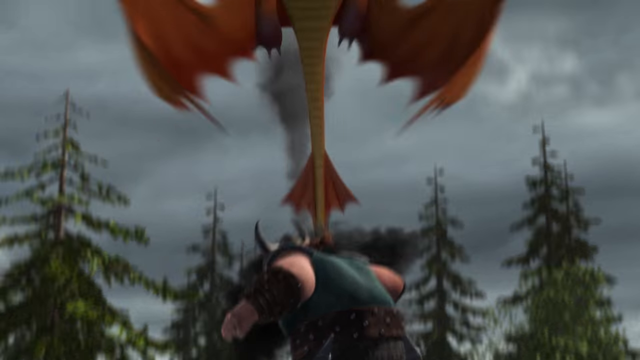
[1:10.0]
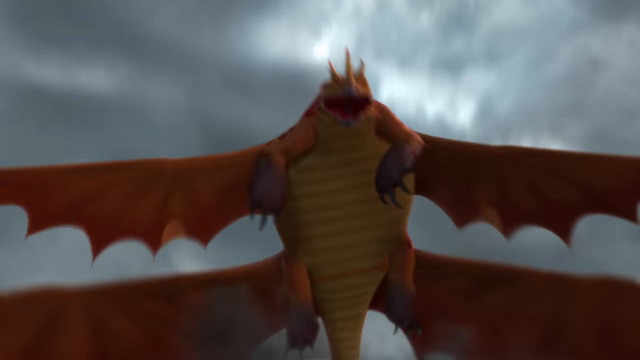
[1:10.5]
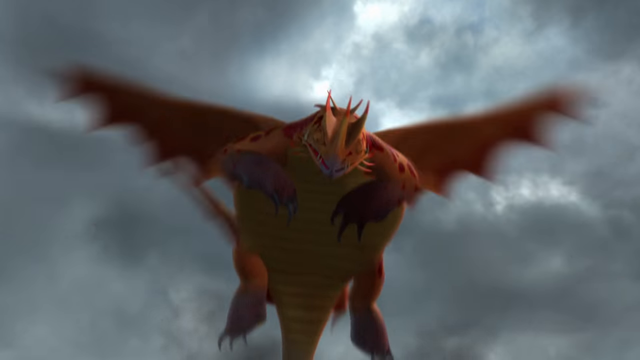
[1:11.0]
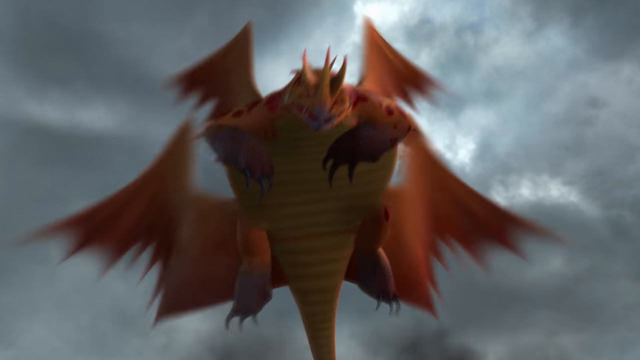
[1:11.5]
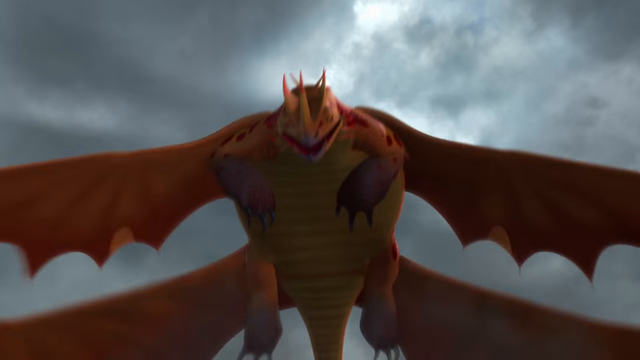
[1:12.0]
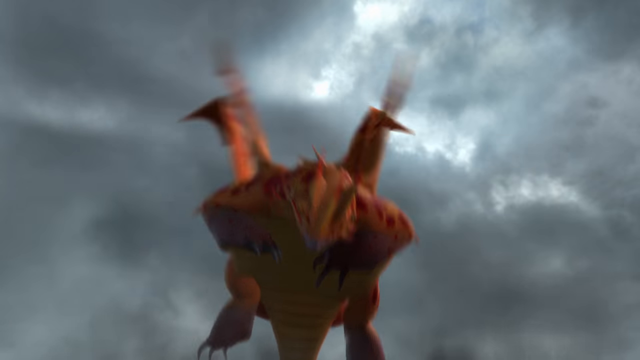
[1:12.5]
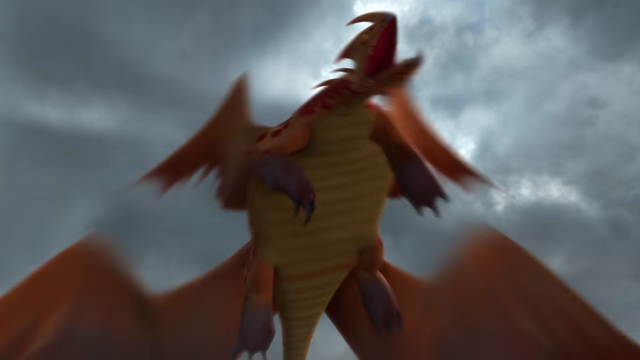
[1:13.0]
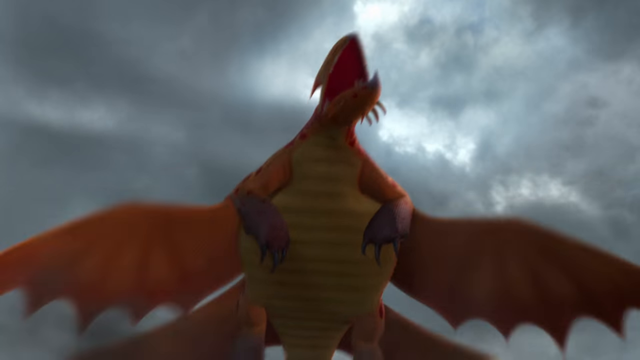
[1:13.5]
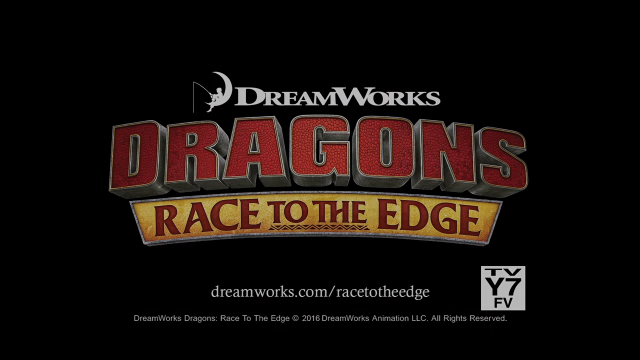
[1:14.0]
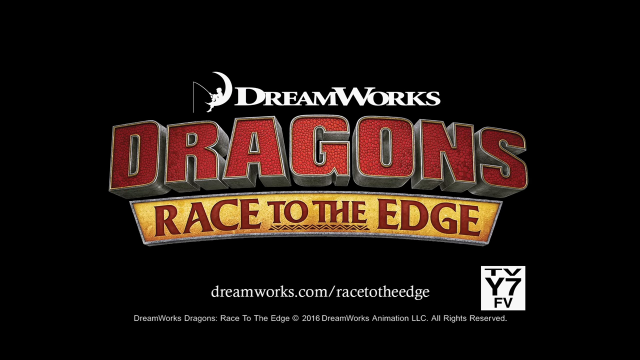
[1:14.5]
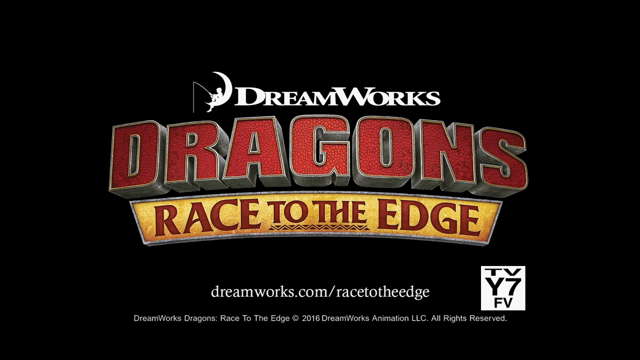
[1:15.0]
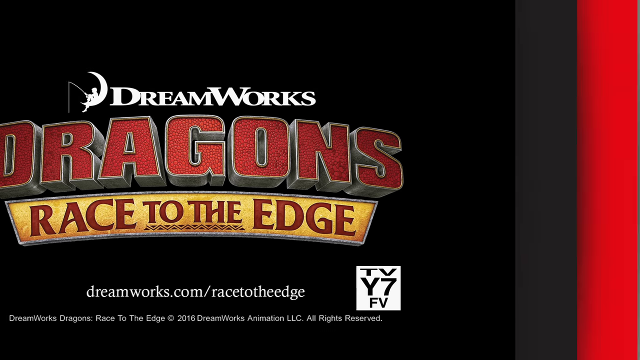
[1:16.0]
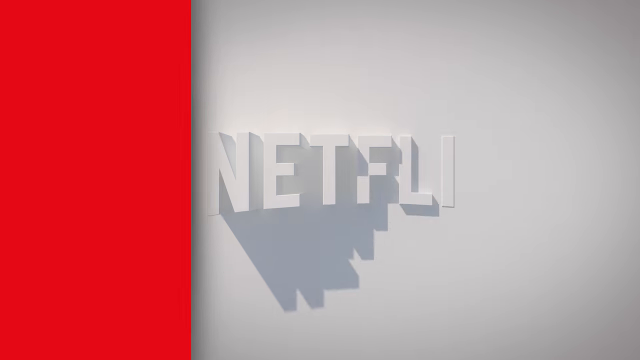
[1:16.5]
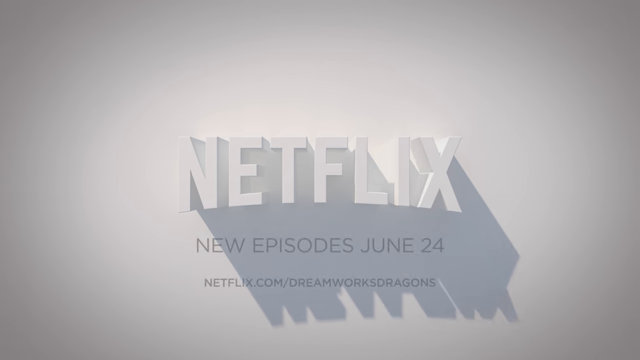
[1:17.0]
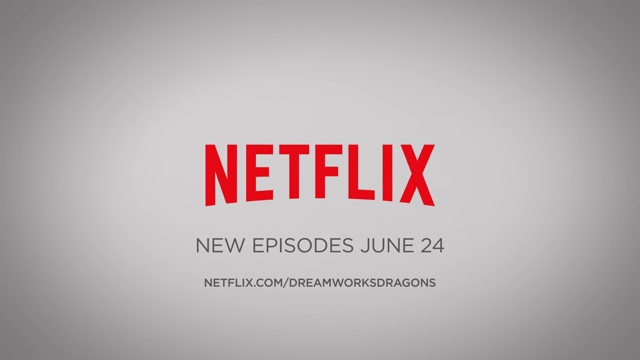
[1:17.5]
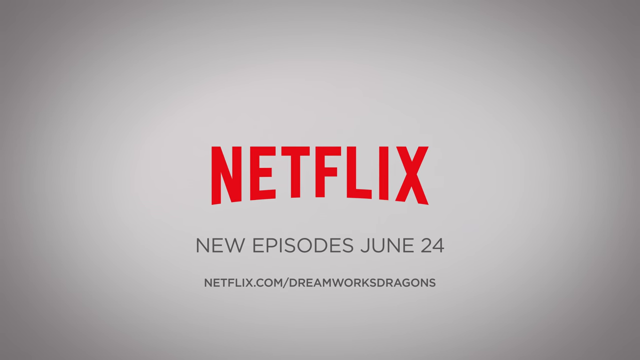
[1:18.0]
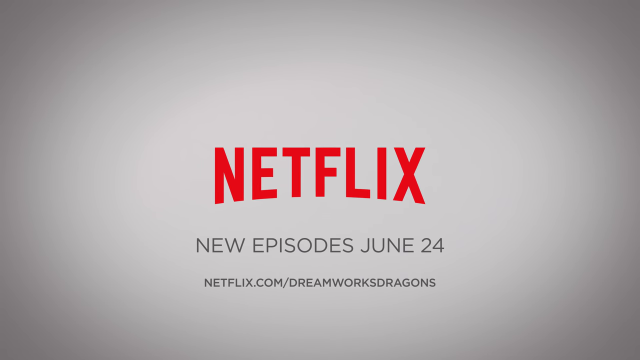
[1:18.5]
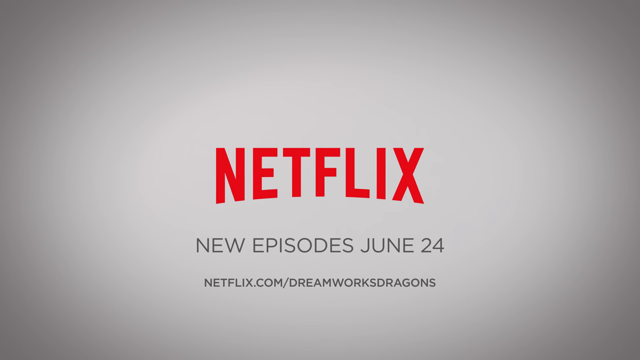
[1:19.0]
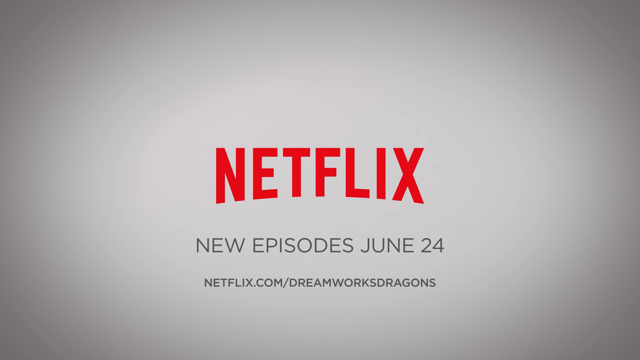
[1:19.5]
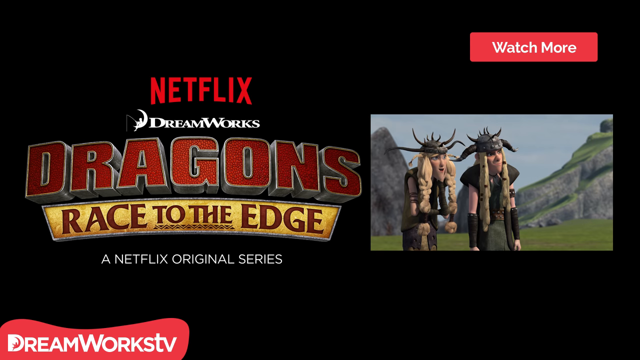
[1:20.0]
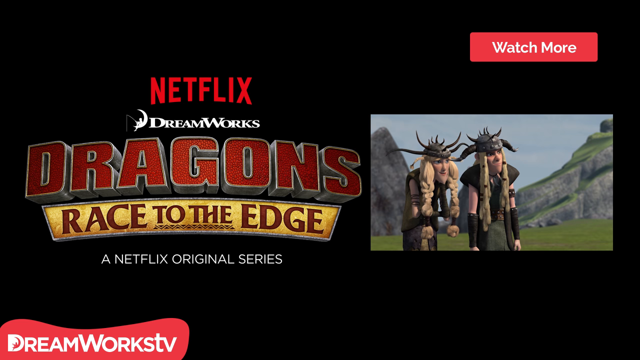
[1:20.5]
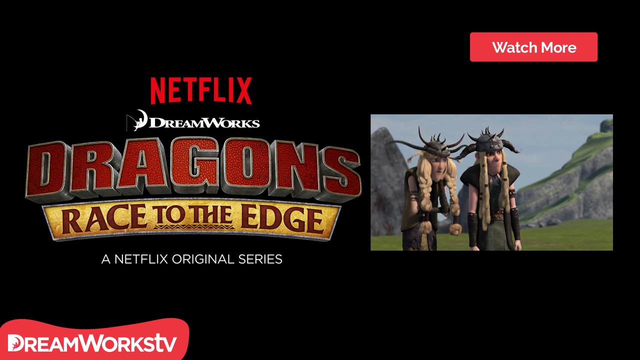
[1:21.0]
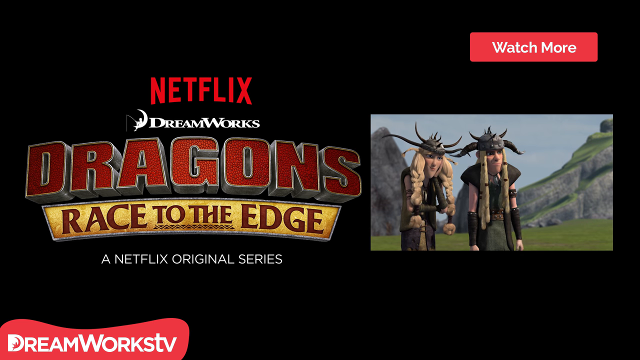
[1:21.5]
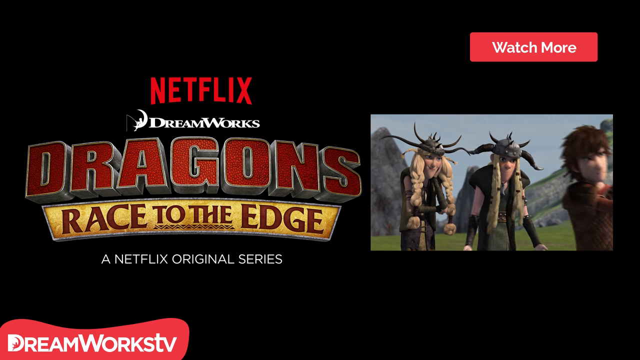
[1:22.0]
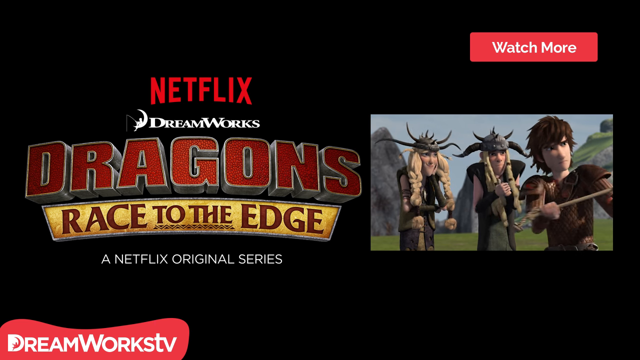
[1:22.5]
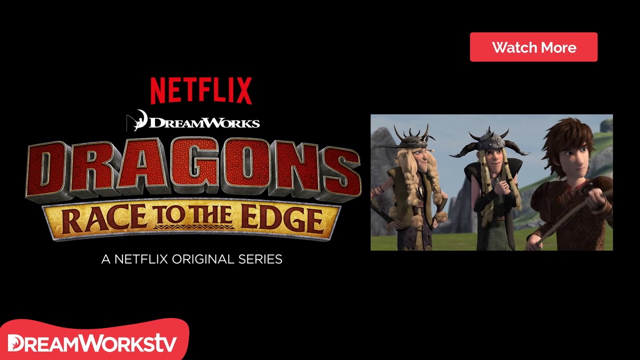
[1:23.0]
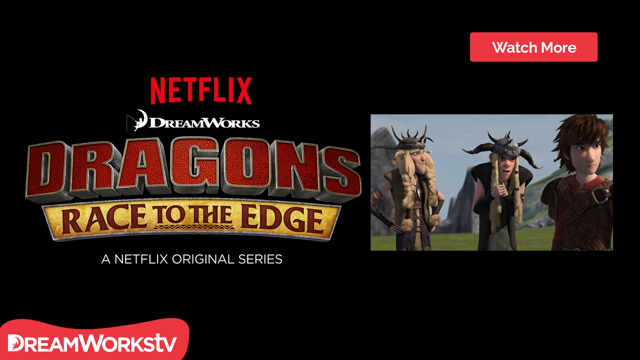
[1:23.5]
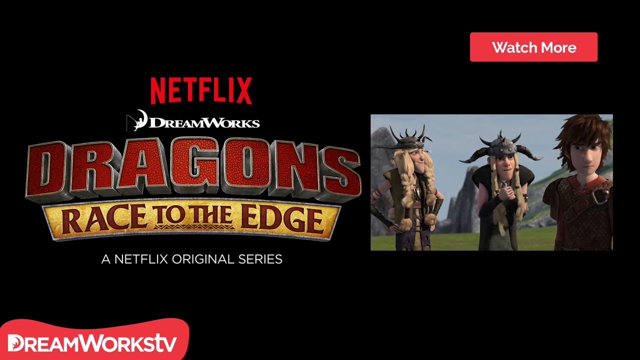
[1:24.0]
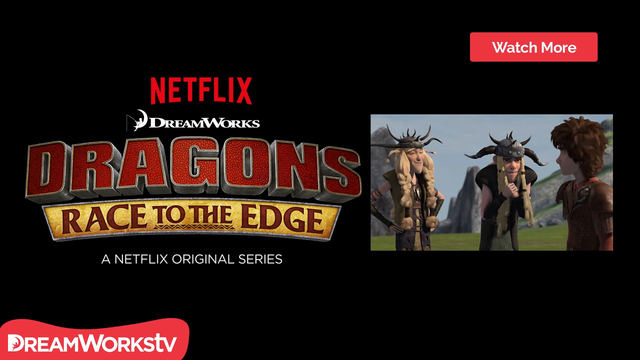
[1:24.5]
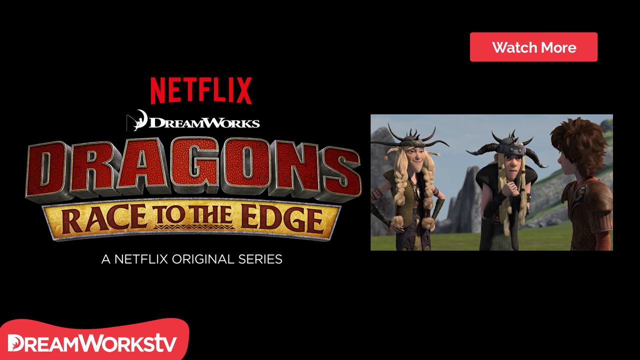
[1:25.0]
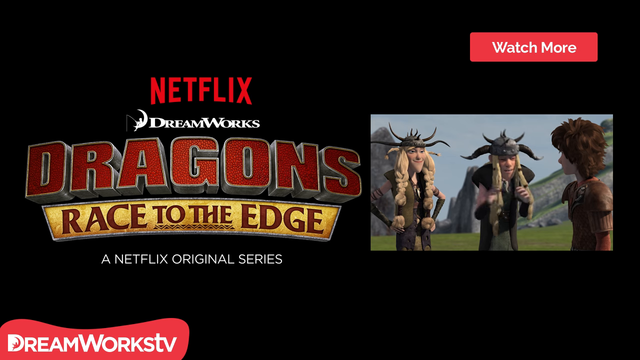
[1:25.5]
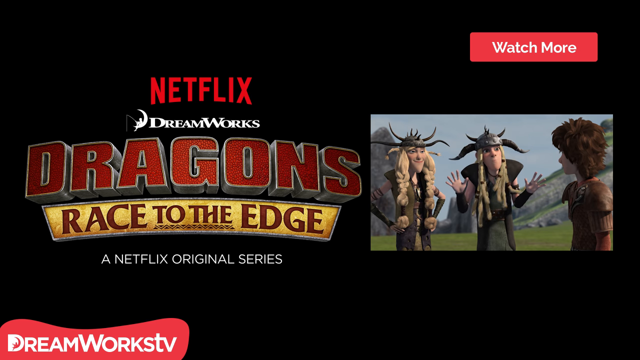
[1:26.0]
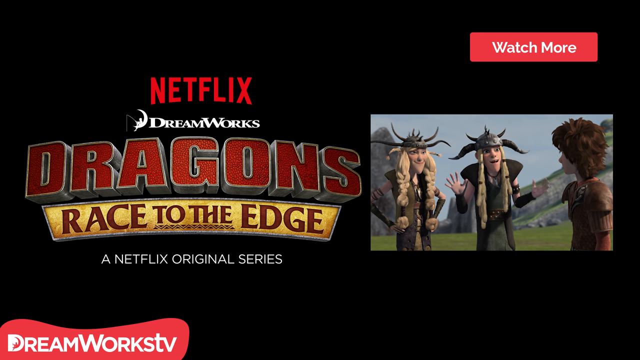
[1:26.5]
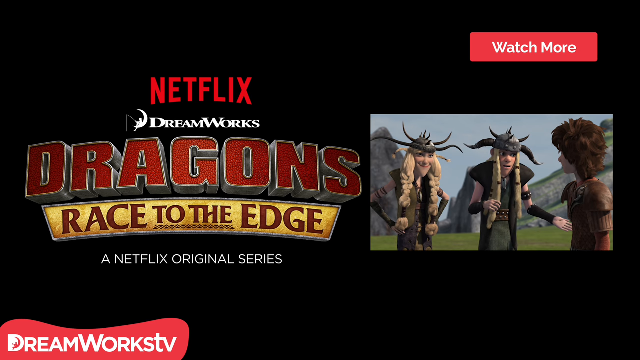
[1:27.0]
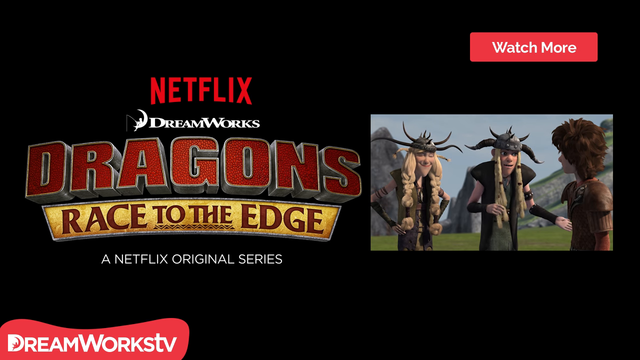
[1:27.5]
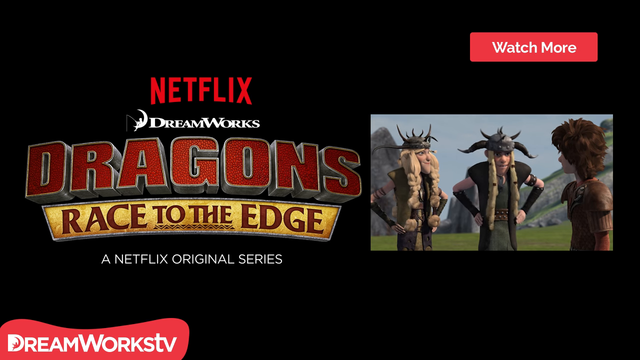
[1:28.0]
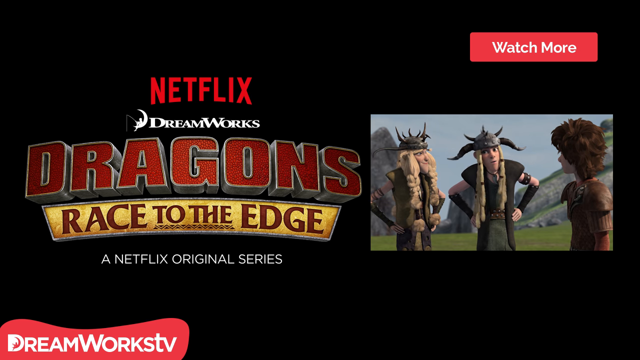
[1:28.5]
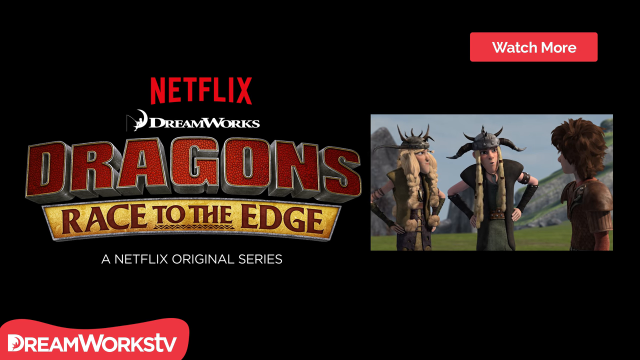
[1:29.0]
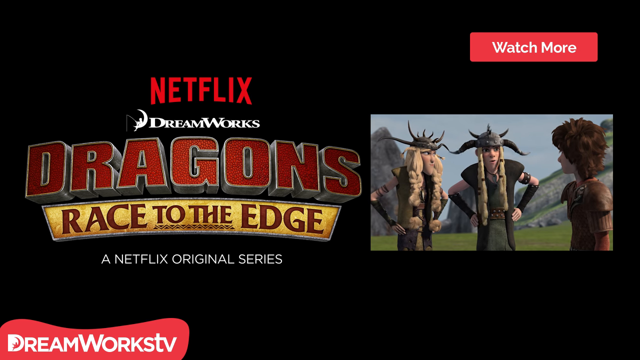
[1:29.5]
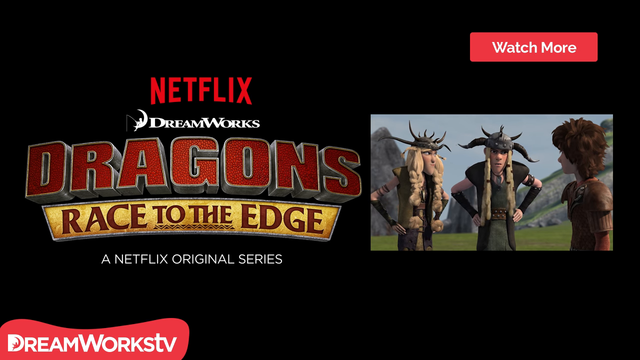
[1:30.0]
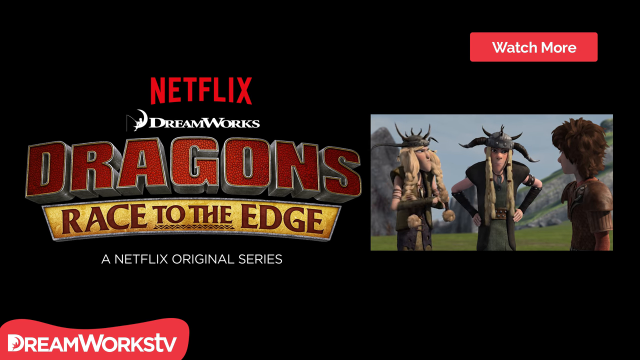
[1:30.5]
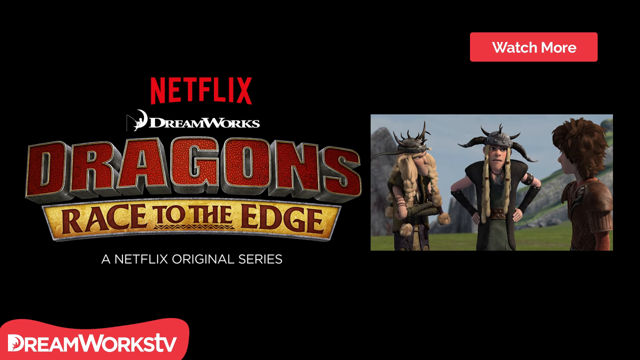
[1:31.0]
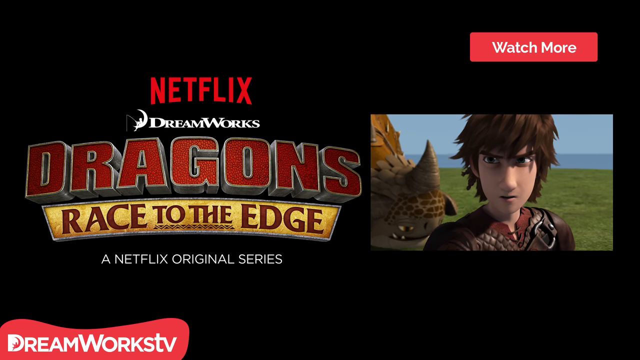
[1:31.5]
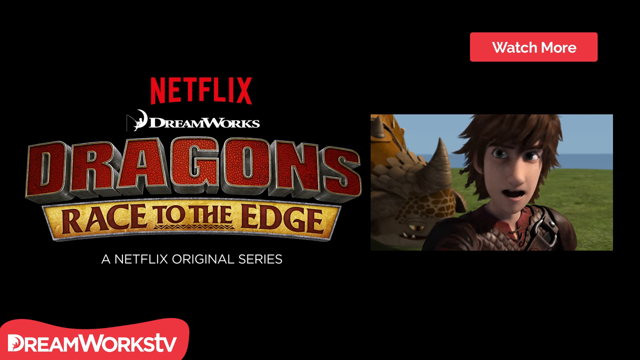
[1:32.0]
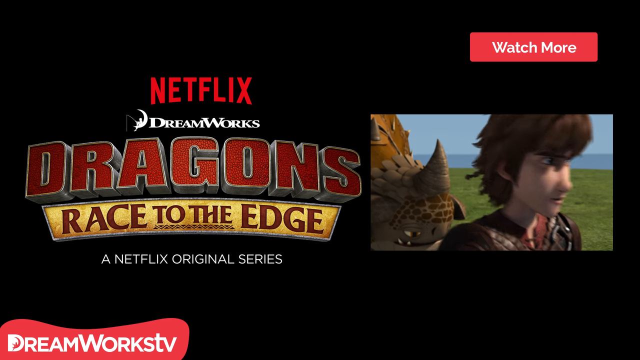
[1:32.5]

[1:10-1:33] The orange dragon flies toward the Viking on the ground while the two characters remain trapped in the net, a kind of prison. The orange dragon flies down into view and gets close to the Viking on the back of the green dragon, then comes up, standing tall, and begins to speak. The scene fades to a title screen for what is possibly a TV show. The title screen shows DreamWorks as the producer; the white DreamWorks logo looks like a silhouette of a person sitting on a moon fishing. The title is "Dragons Race to the Edge", with "Dragons" written in red letters and "Race to the Edge" in kind of brown lettering on a yellow background. It reads "TVY7". The Netflix logo then appears again, with "new episodes, June 24th" below it.